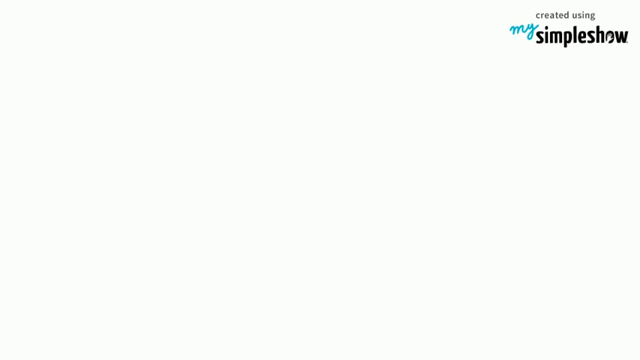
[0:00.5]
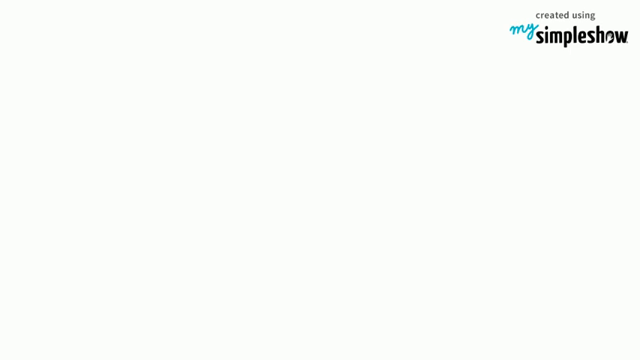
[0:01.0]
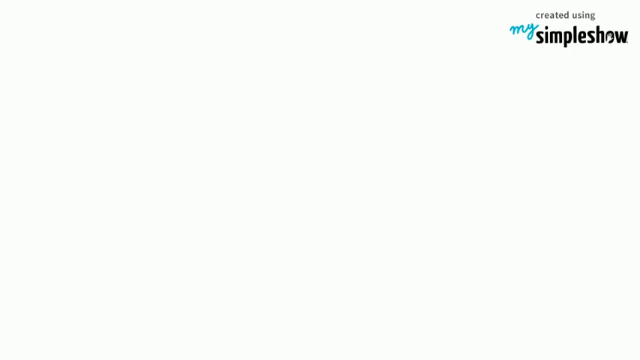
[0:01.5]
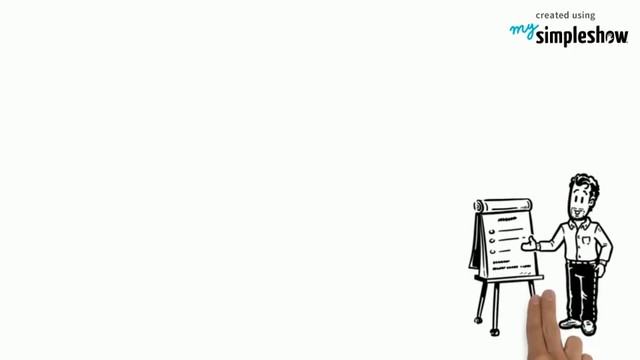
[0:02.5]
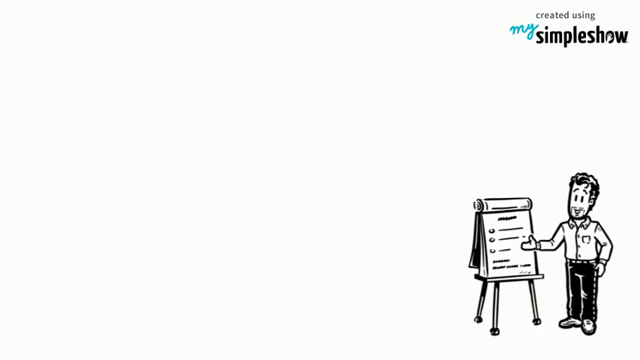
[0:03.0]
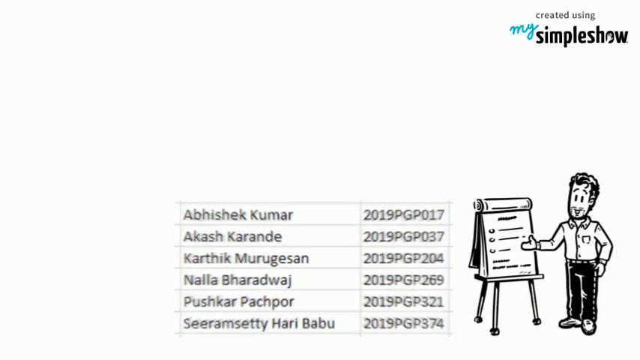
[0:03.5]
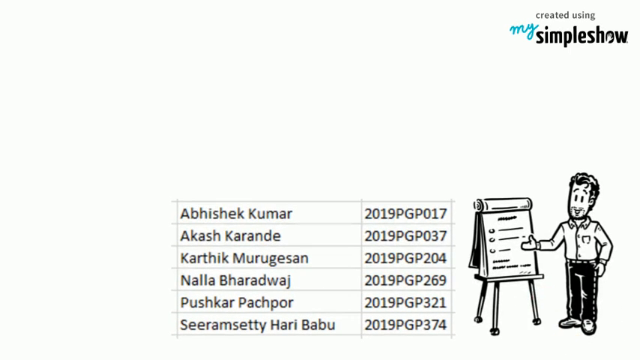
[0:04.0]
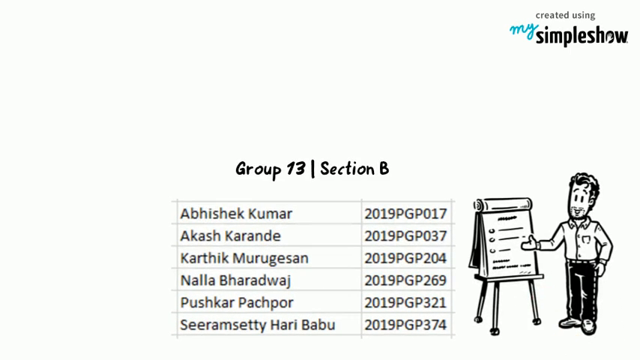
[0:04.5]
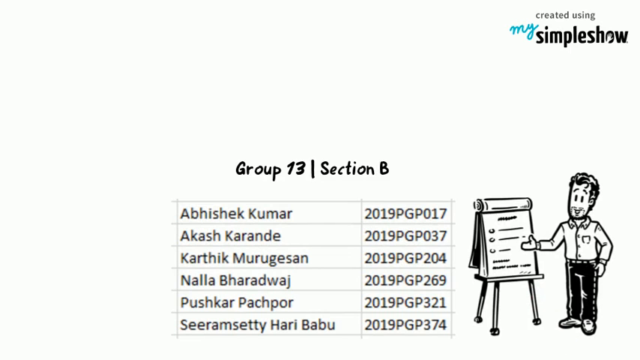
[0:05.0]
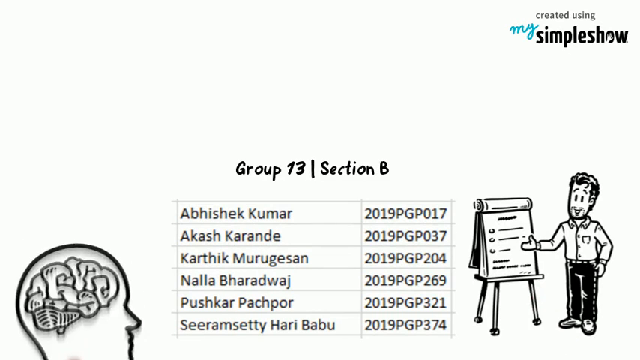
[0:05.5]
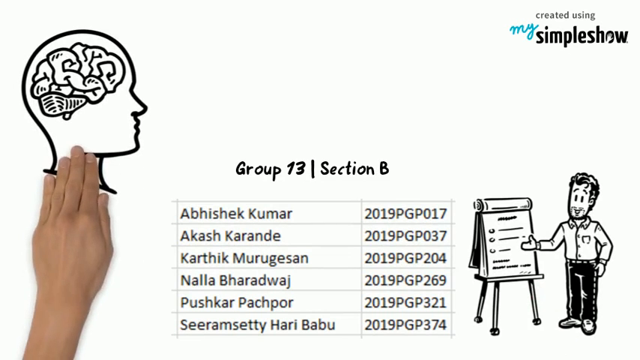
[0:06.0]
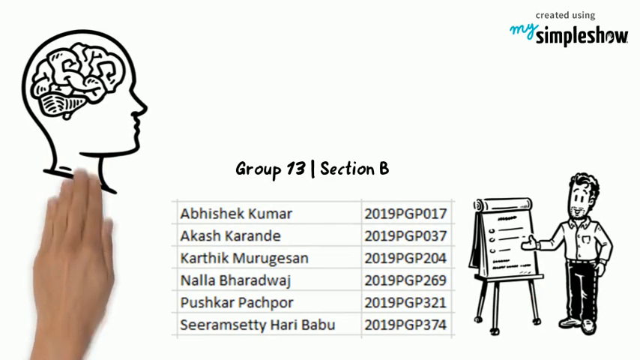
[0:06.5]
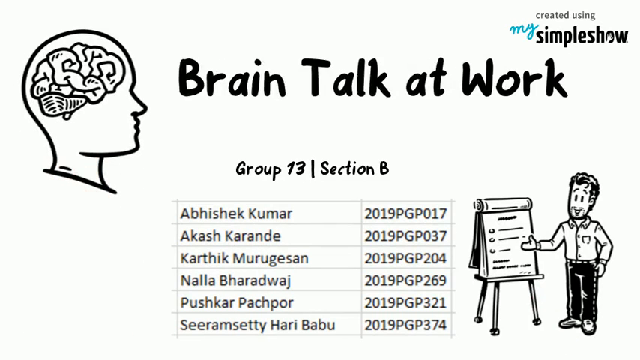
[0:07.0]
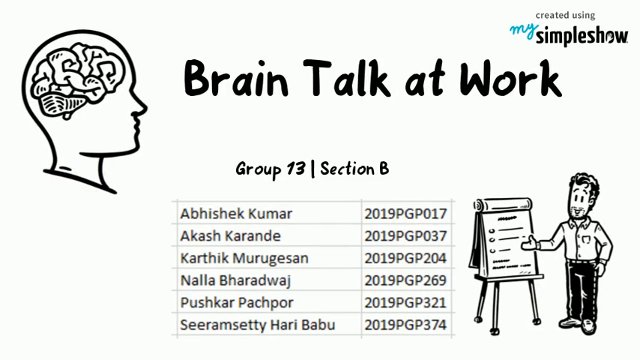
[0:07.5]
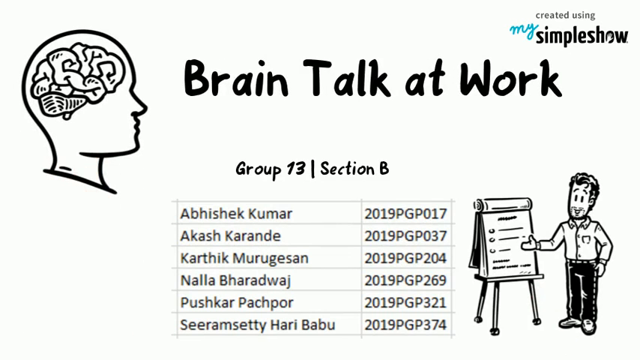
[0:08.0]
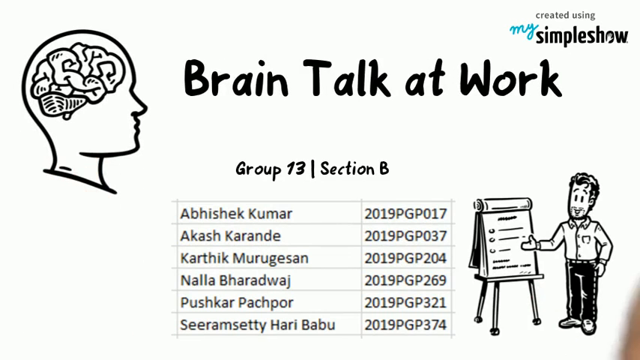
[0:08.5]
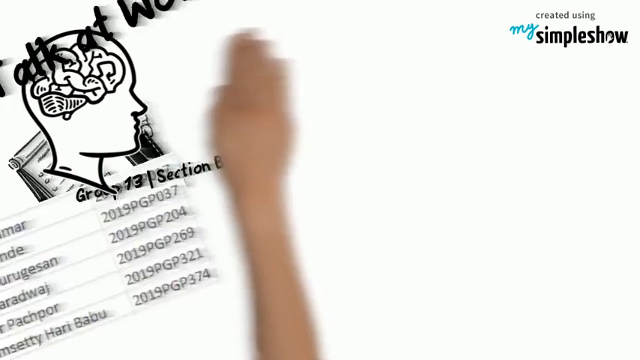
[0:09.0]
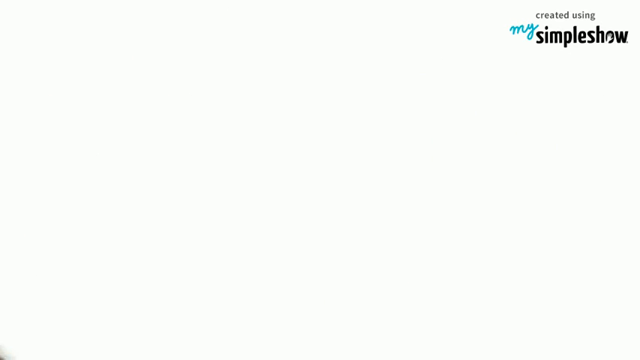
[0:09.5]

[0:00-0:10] The video opens with a list of students. Text at the top indicates it was created using MySimpleShow. A table shows the students' names and what seems to be their admission numbers, indicating that all of the students are in group 13 and section B. About eight students are shown on the screen, in two columns and about seven rows. On the right-hand side of the screen is a man showing the names of the students. At the top of the screen there is something that looks like a woman's head with a brain, along with the topic, brain talk at work. It seems to be a display of the students and their classification.